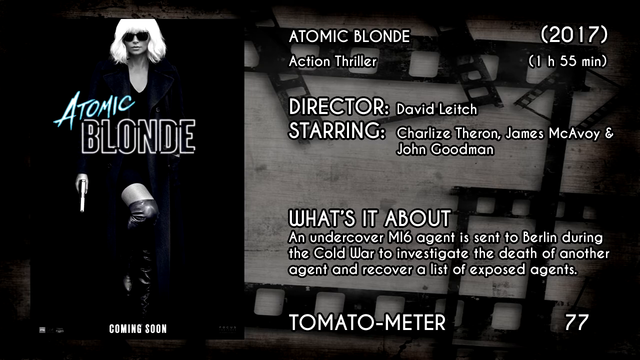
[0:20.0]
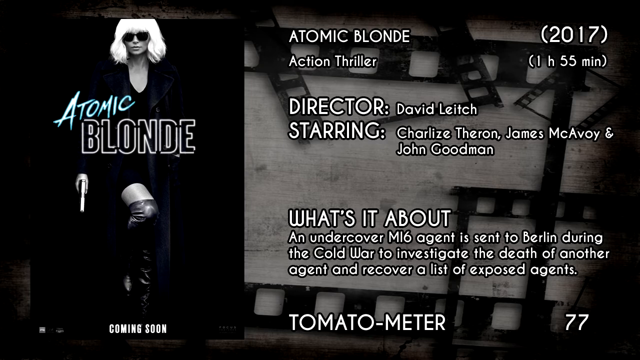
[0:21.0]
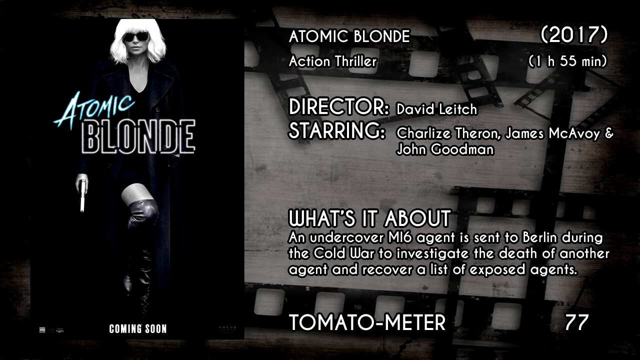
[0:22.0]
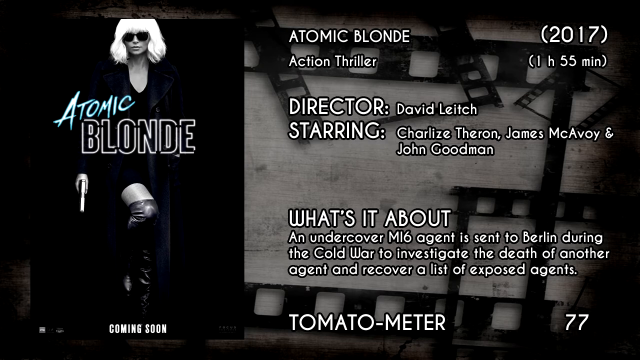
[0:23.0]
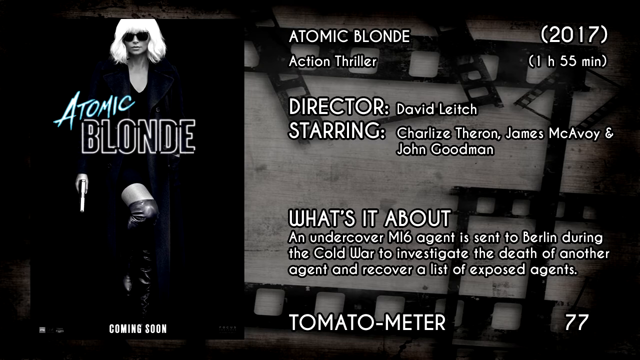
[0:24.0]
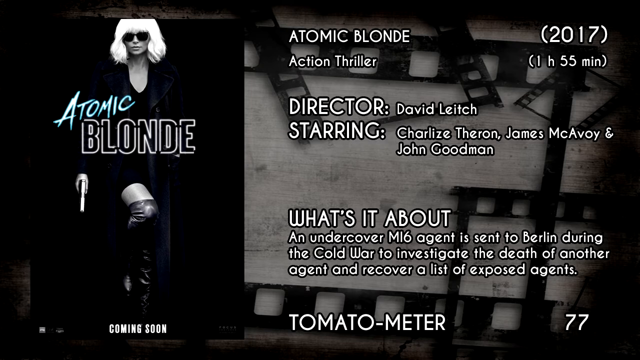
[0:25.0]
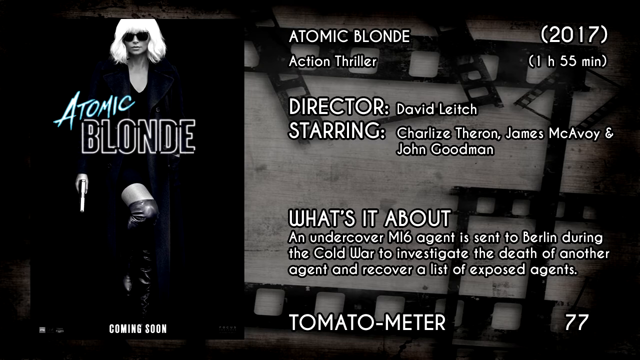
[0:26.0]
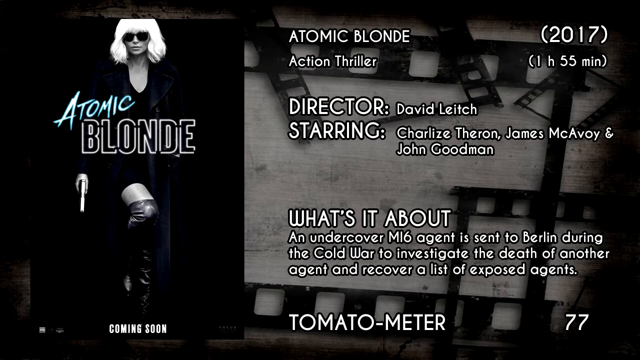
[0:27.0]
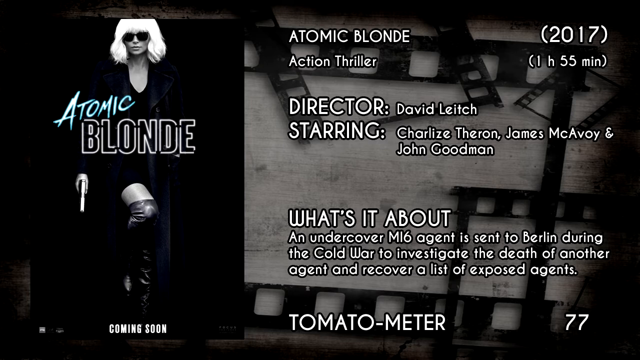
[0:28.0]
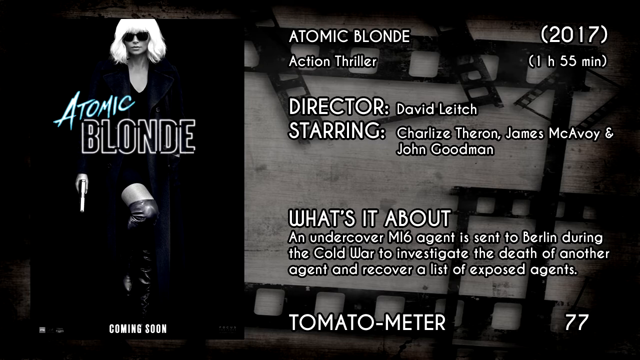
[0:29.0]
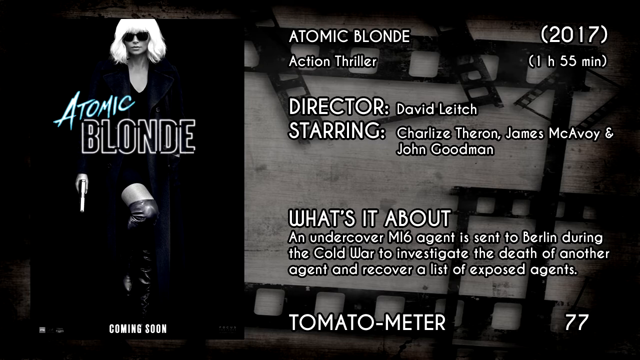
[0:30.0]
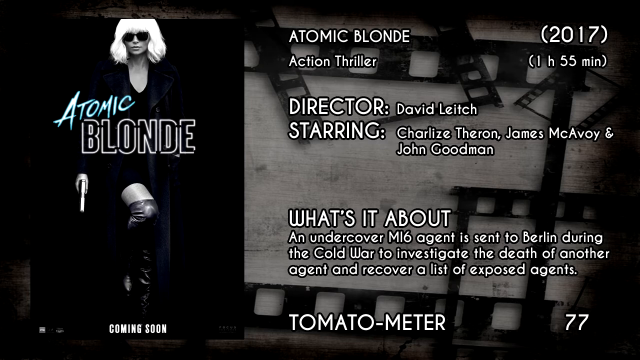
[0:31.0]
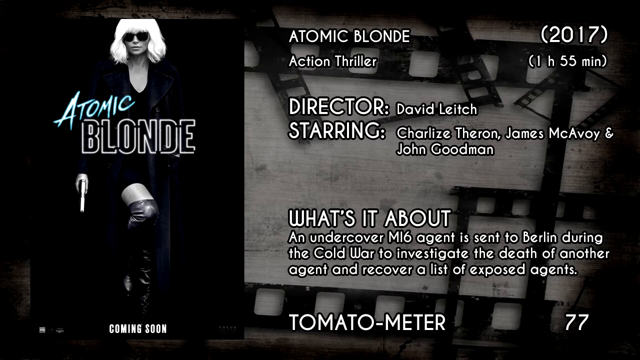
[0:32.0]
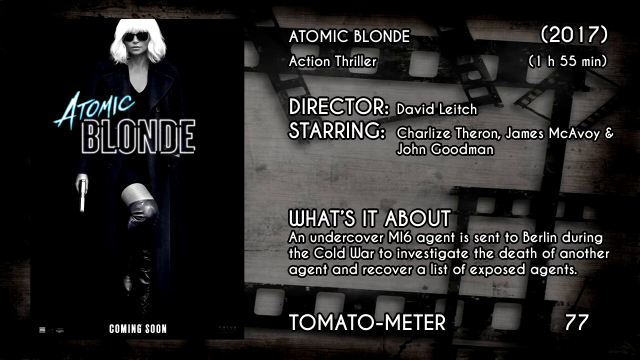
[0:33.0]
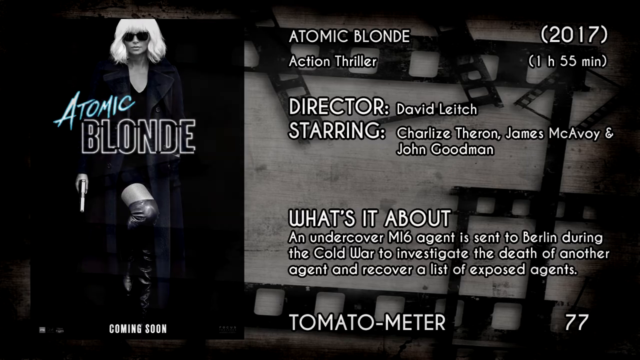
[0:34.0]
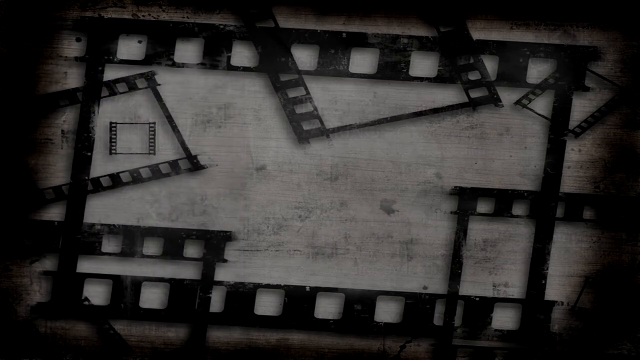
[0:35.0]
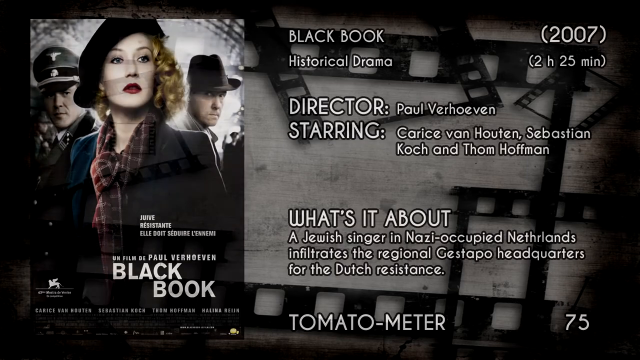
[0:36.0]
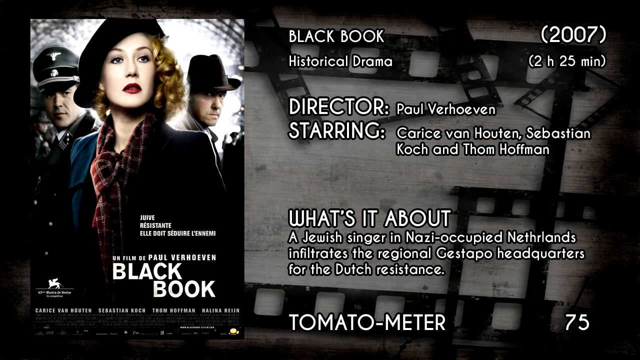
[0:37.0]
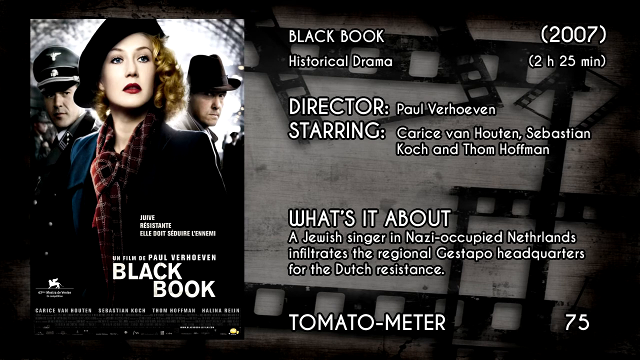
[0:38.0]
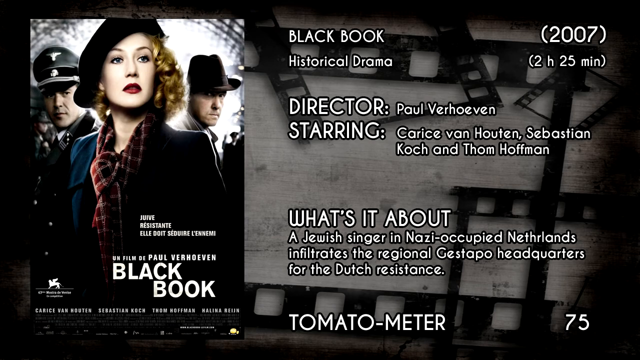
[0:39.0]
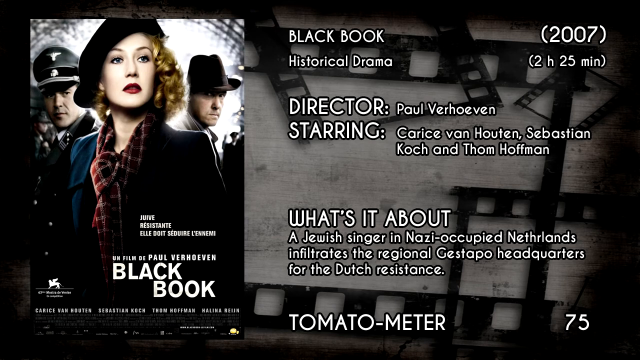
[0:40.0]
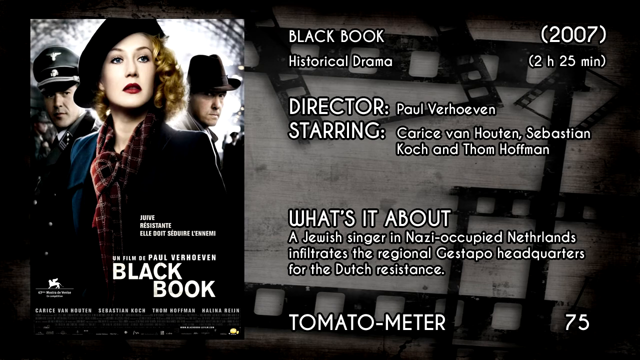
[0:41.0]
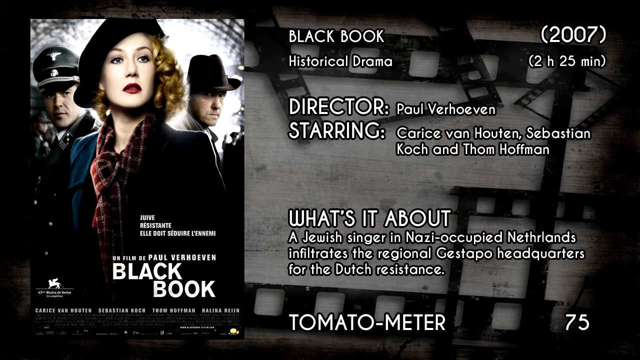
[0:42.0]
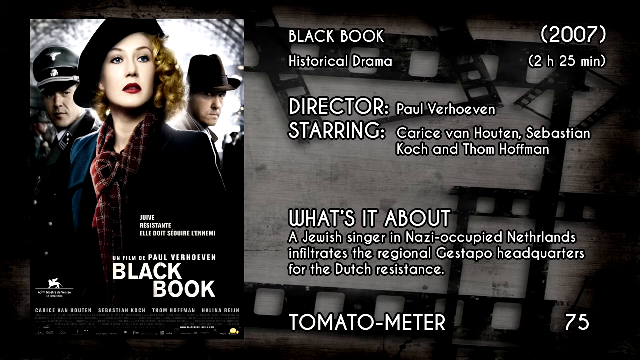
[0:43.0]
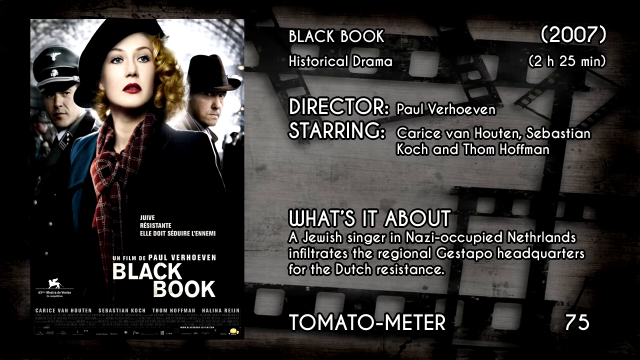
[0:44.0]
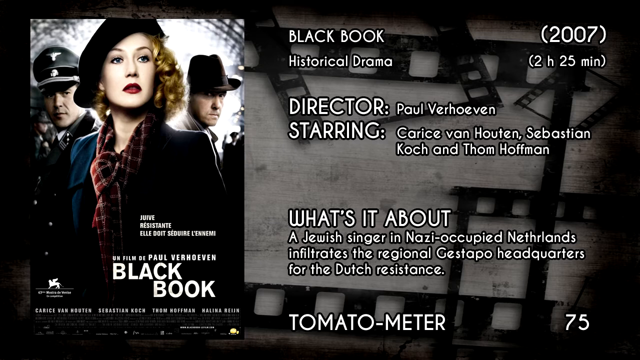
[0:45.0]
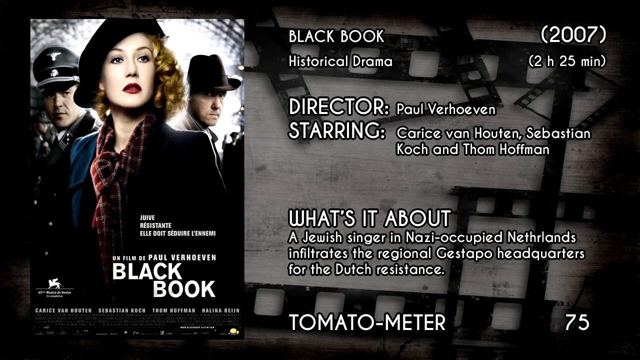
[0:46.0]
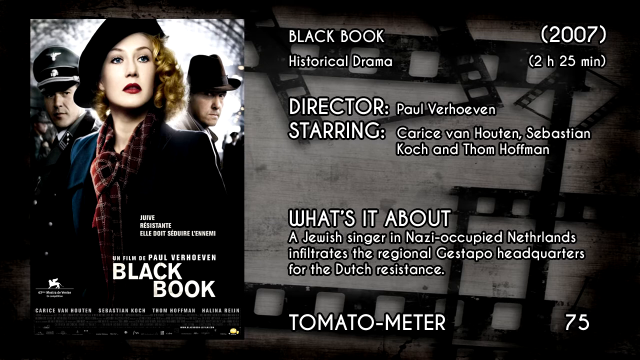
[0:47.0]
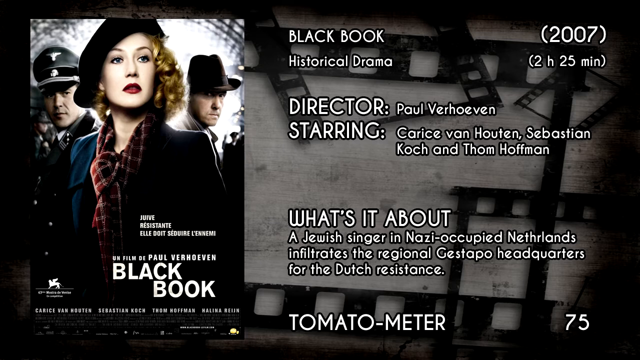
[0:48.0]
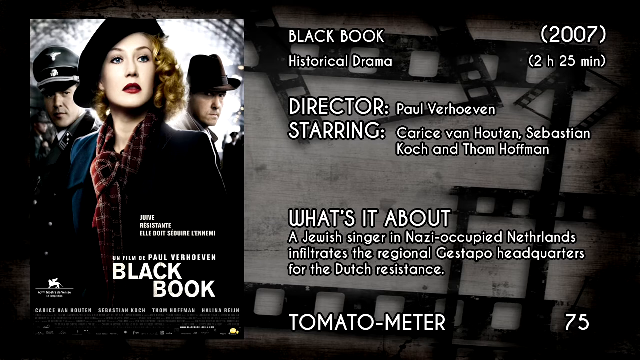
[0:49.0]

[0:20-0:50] The information about Atomic Blonde stays up, with the cast, the Tomato Meter rating and the movie poster. It then cuts to Black Book: historical drama, 2007, 2 hours 25 minutes, director Paul Verhoeven, starring Carise van Hooten, Sebastian Kotch and Thom Hoffman. Under "What's it about?" it reads "A Jewish singer in a Nazi occupied Netherlands infiltrates the regional Gestapo headquarters for the Dutch resistance." The Tomato Meter rating is 75. The poster on the left shows two men on both sides of a woman, both wearing hats; the woman wears a jacket, a scarf and a hat.